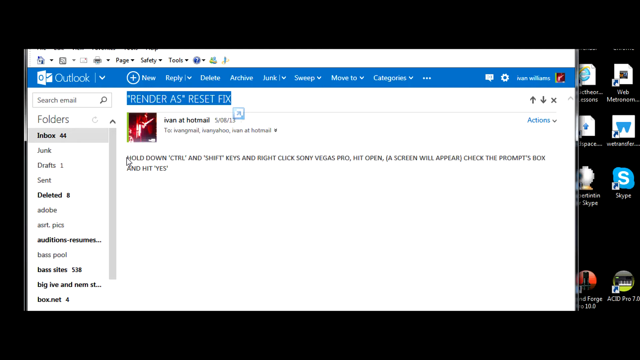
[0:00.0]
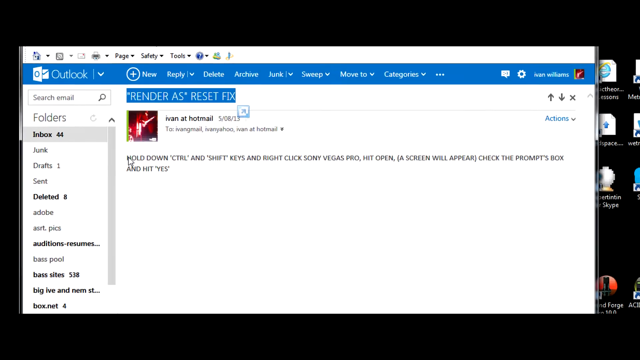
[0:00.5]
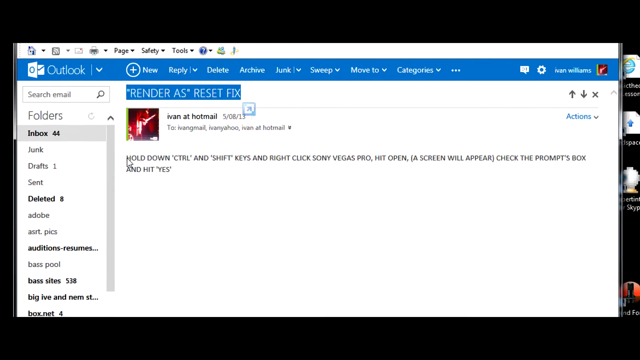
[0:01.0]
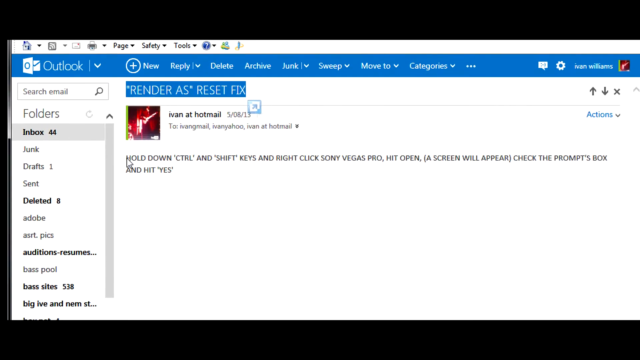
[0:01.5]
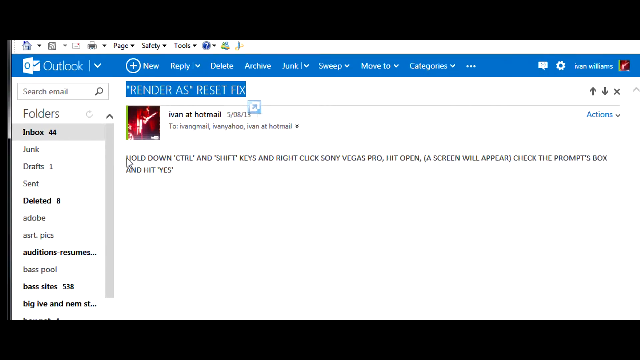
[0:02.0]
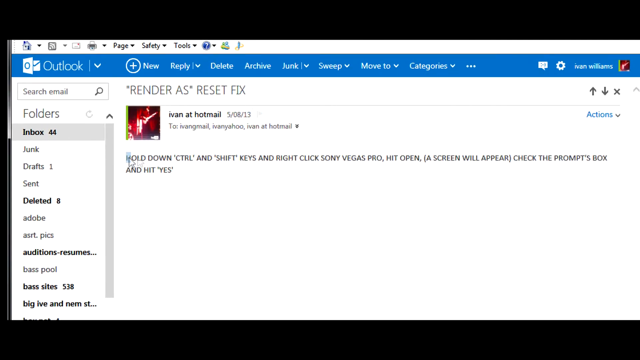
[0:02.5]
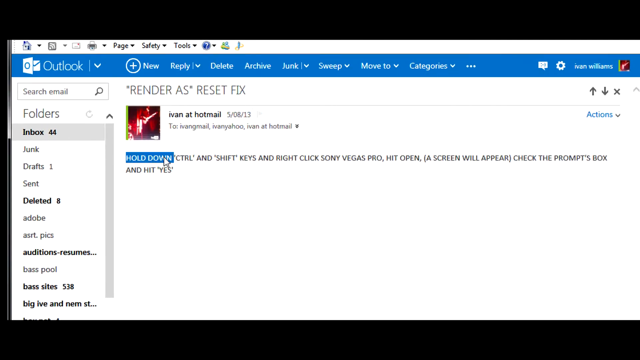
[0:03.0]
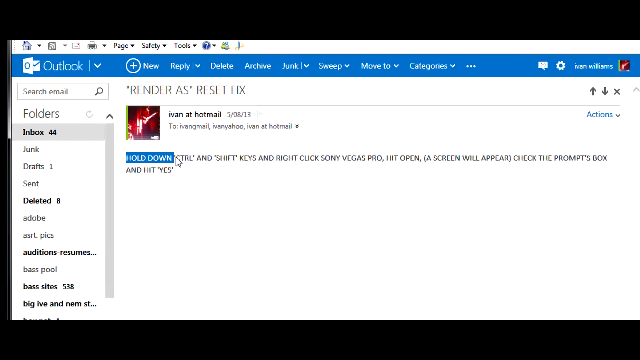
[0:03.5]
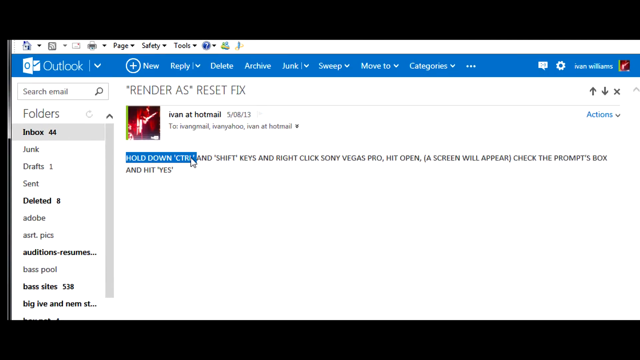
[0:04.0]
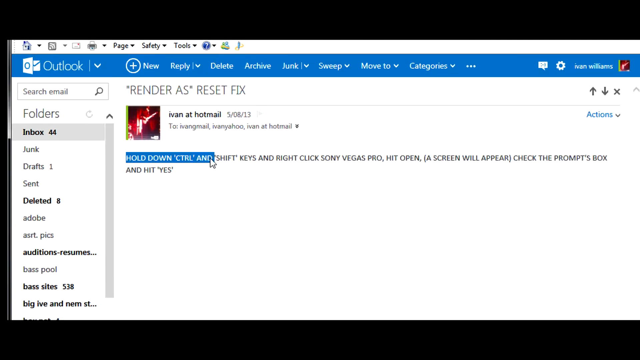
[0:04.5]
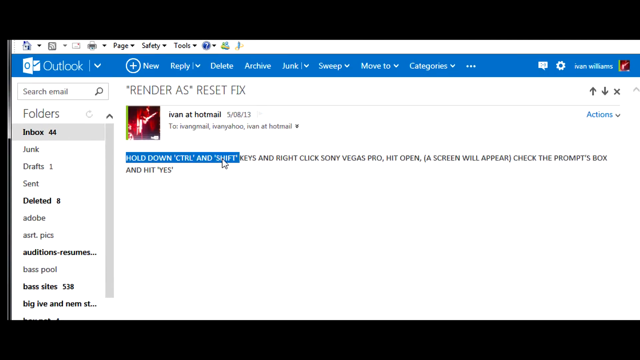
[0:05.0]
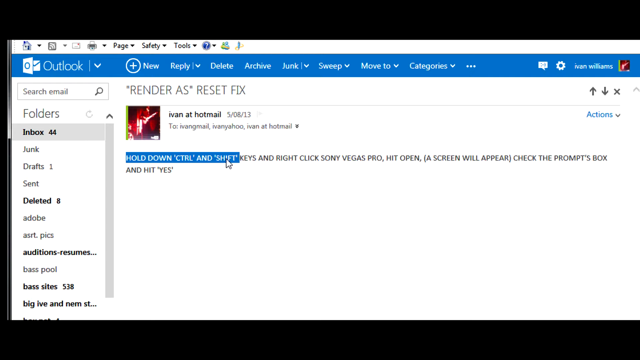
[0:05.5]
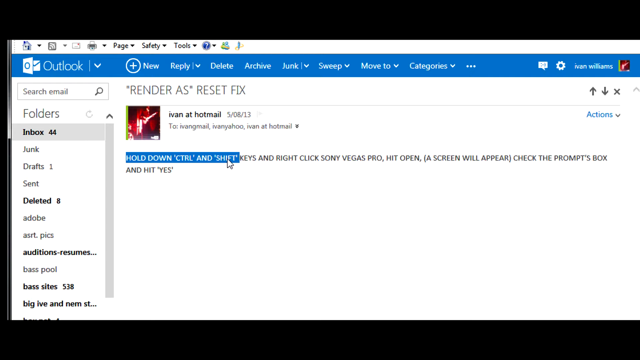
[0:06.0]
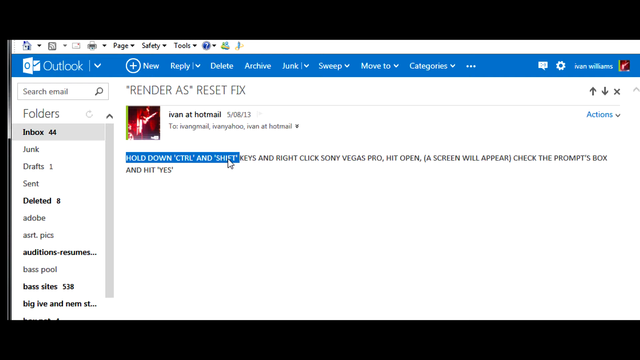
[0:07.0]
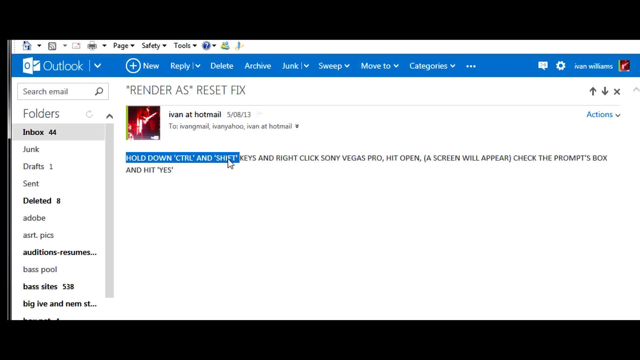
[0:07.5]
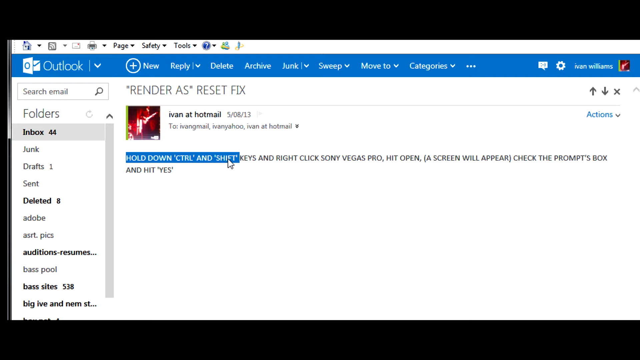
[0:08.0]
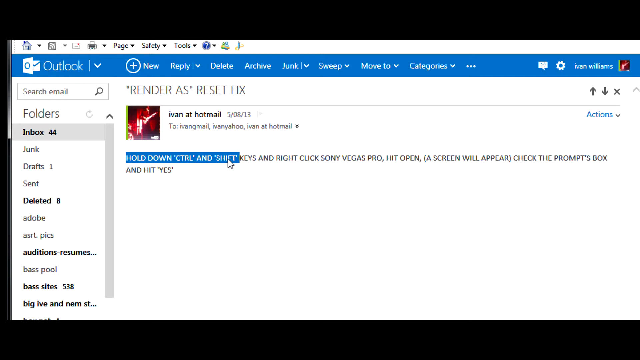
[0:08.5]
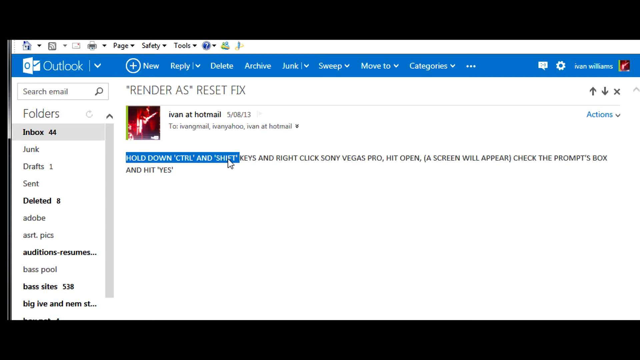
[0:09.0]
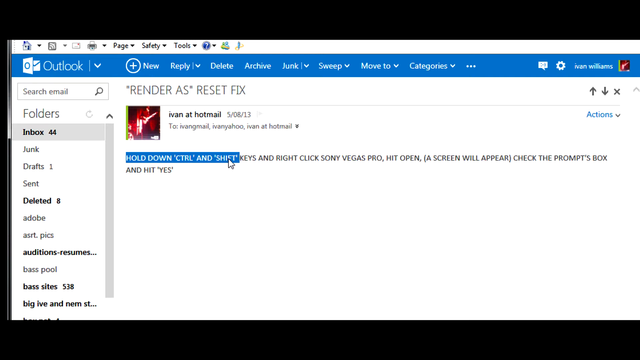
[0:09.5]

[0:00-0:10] A Microsoft Outlook window is open, with "new," "reply," "delete," "archive" and other options along the top of the navigation window. The title of the email says "render as reset fix," and the sender reads "Ivan at Hotmail," with a profile picture of someone playing the guitar. The mouse cursor moves to the body of the email and highlights its first words, "hold down," followed by "CTRL" and "shift" with parentheses. The inbox appears to have 44 unread emails.